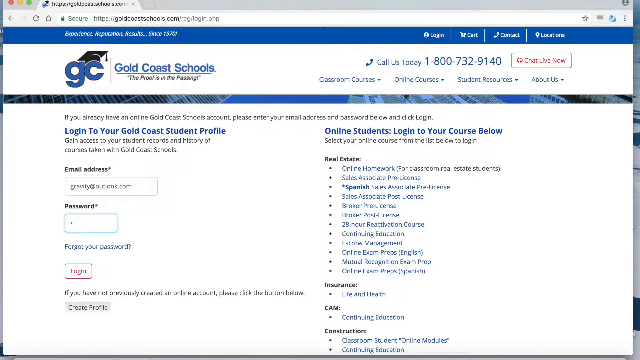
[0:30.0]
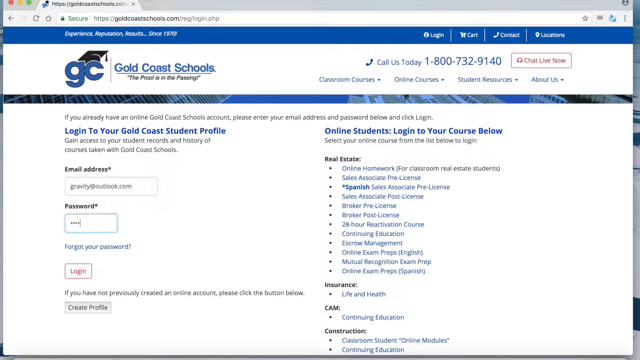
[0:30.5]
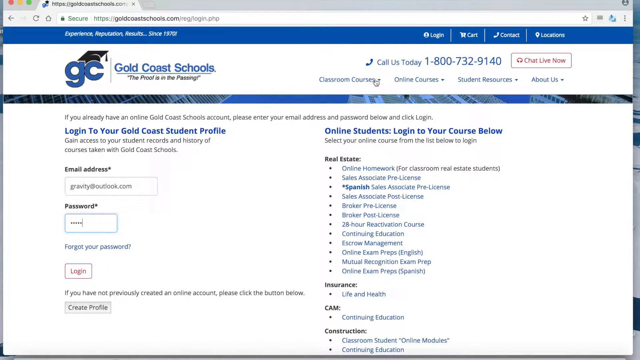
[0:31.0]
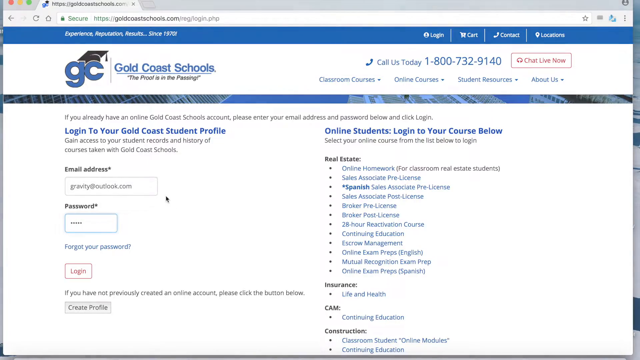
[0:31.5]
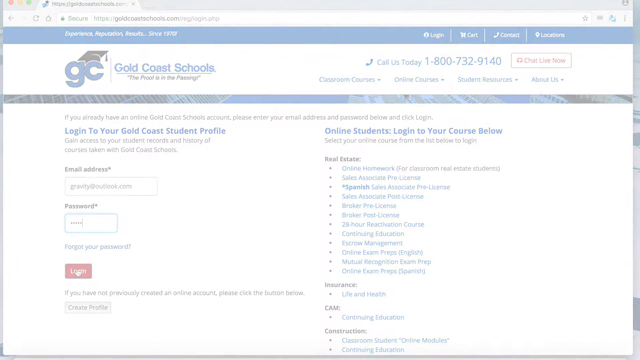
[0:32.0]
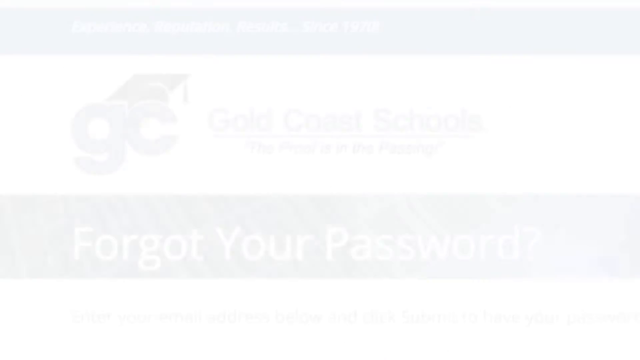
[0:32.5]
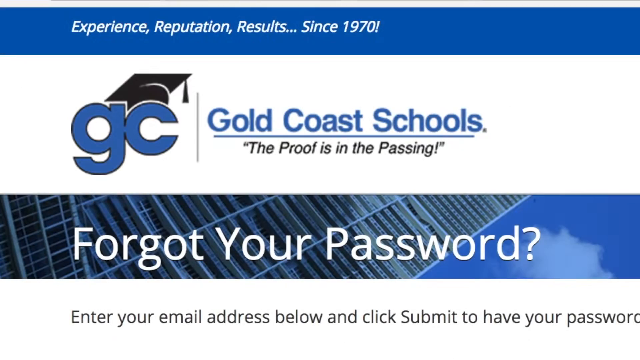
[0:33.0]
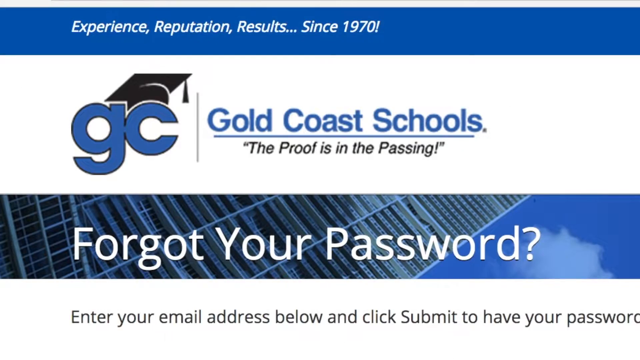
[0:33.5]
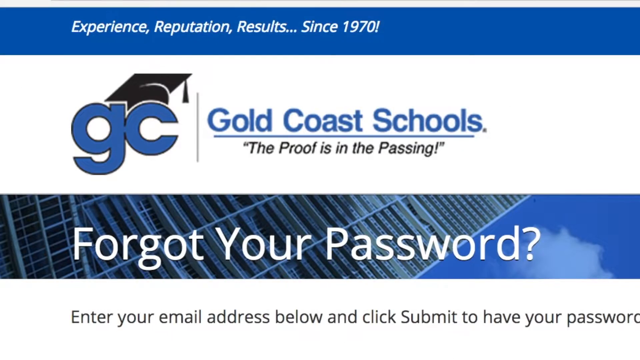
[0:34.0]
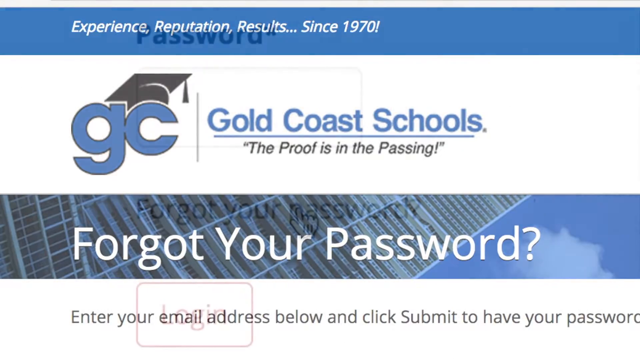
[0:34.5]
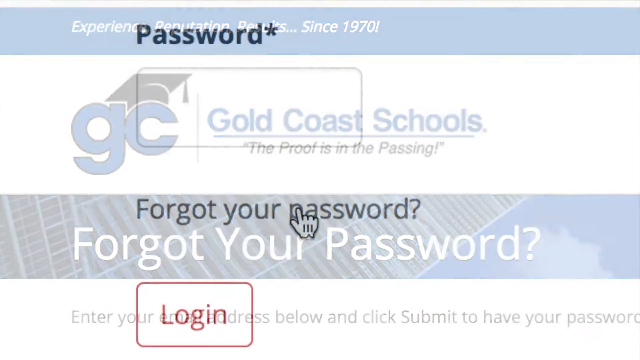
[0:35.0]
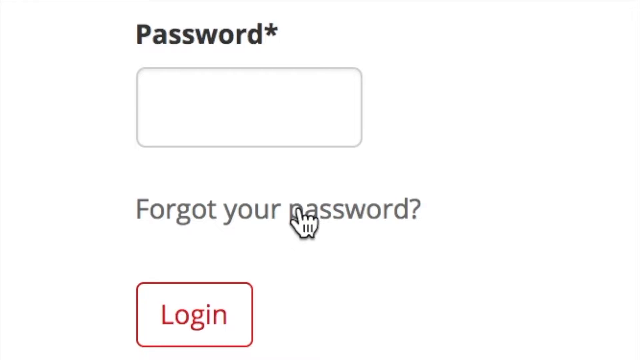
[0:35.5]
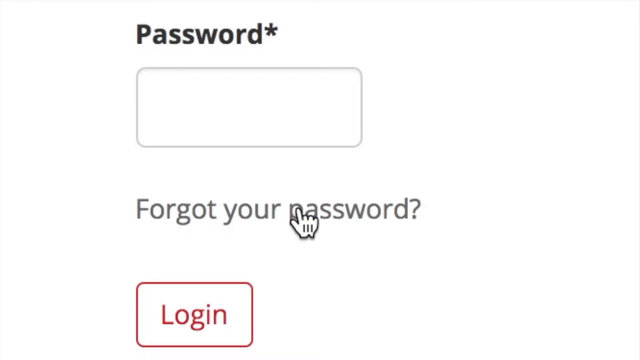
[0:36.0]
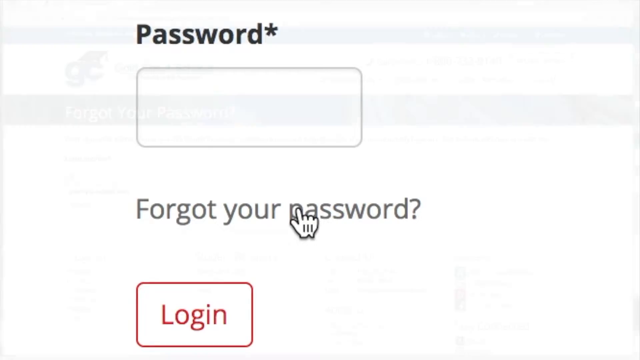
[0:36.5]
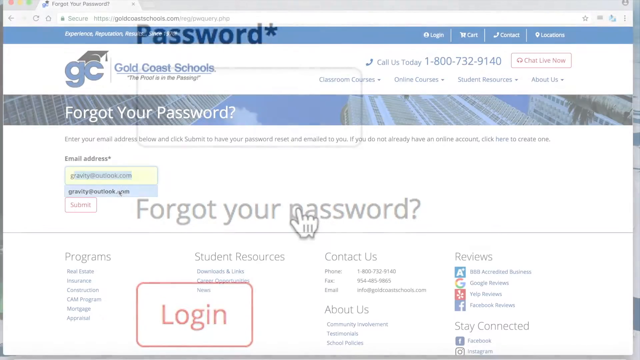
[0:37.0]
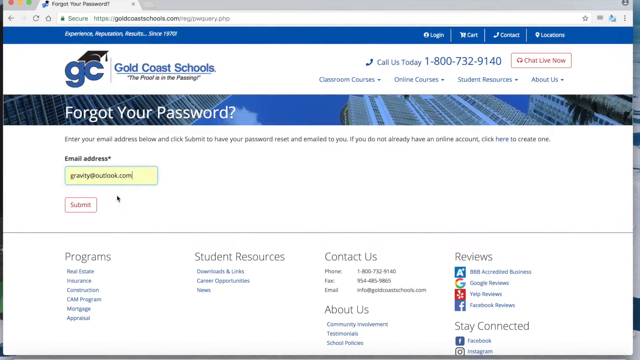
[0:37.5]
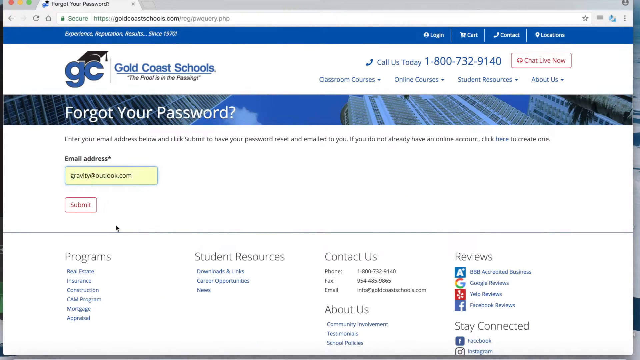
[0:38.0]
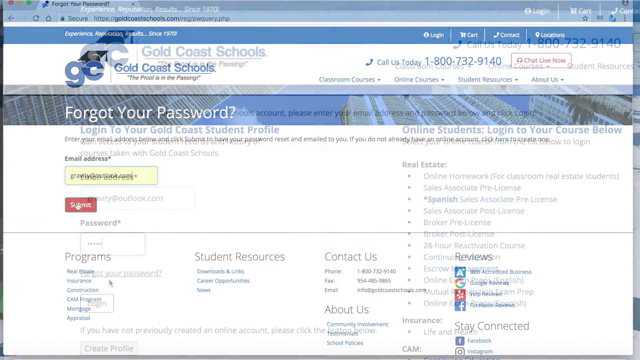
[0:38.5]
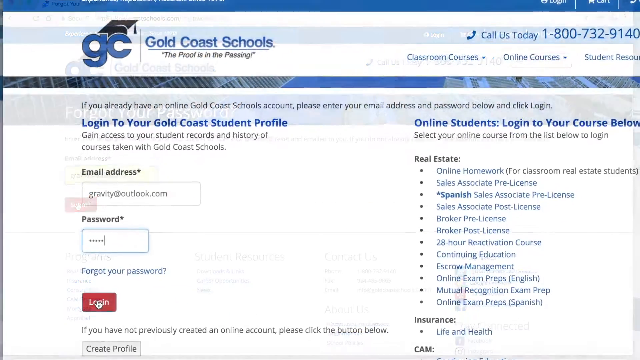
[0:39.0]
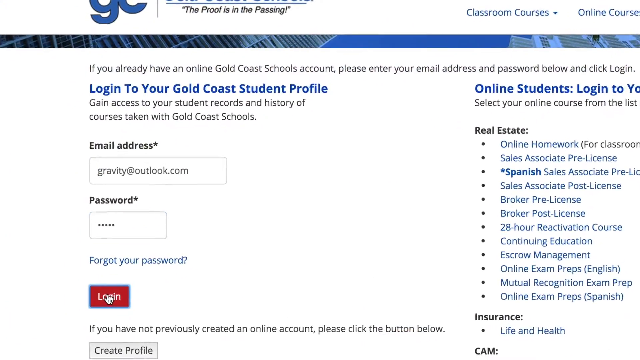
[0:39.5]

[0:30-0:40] The main Gold Coast Schools web page appears, with the GC logo on the left and a graduation hat at the top. A blue bar at the top says "experience reputation results since 1970", and below the Gold Coast Schools name it says "forgot your password", with "enter your email address below and click submit to have your password changed" underneath. The screen then changes to one where someone puts their password in, and the cursor clicks on "forget your password". It goes back to the forgot your password page, where someone enters an email address and clicks submit.